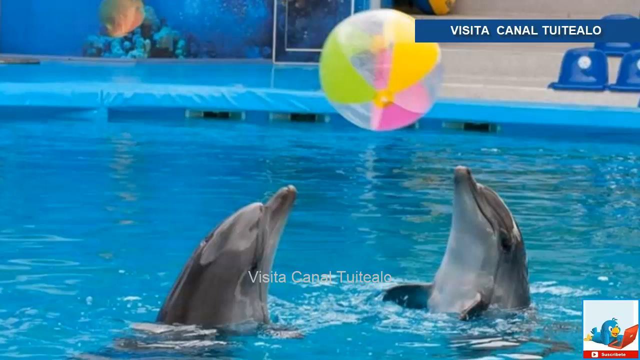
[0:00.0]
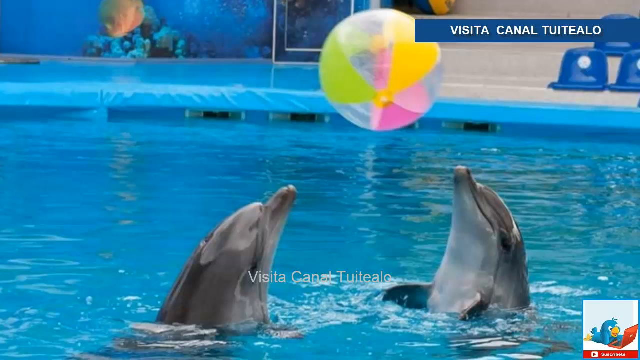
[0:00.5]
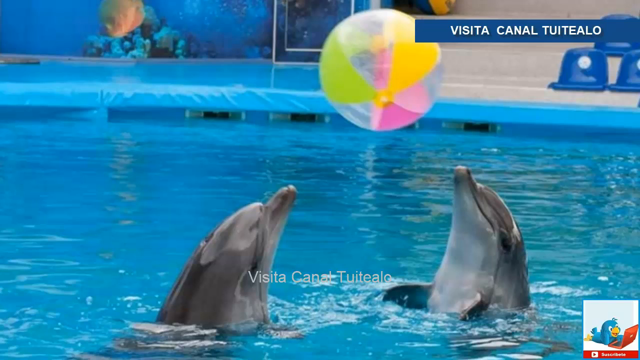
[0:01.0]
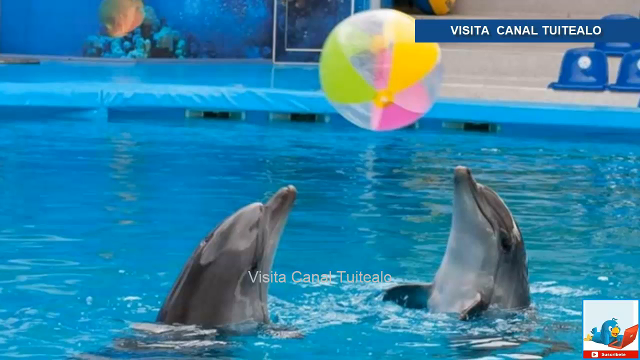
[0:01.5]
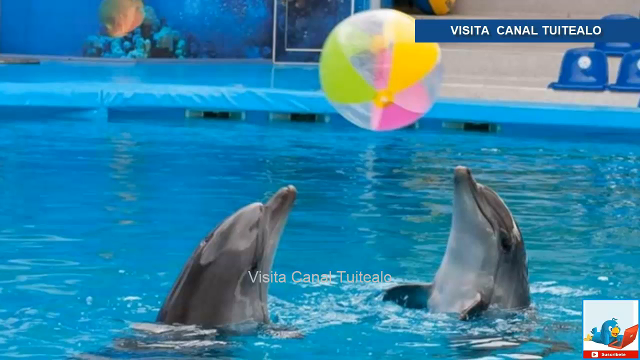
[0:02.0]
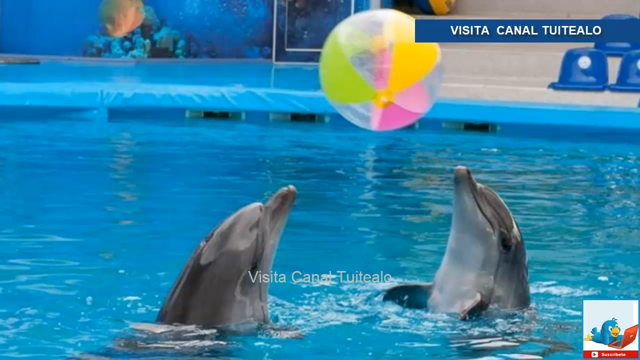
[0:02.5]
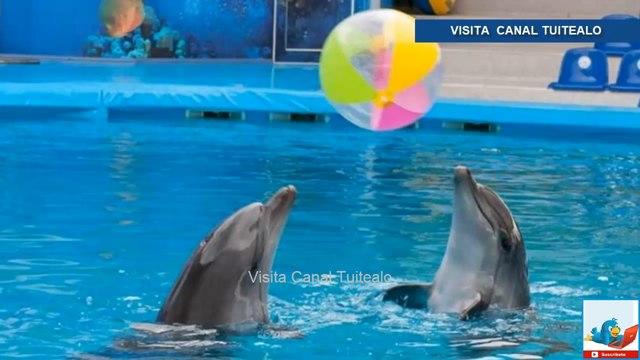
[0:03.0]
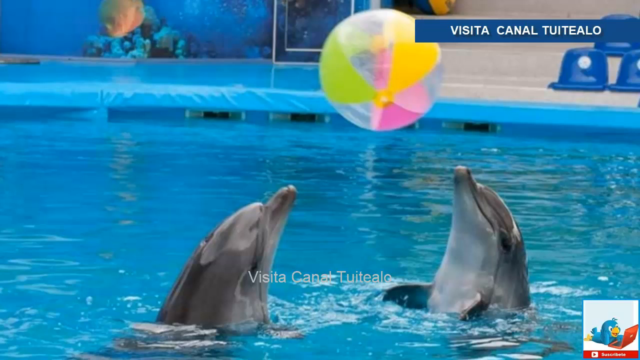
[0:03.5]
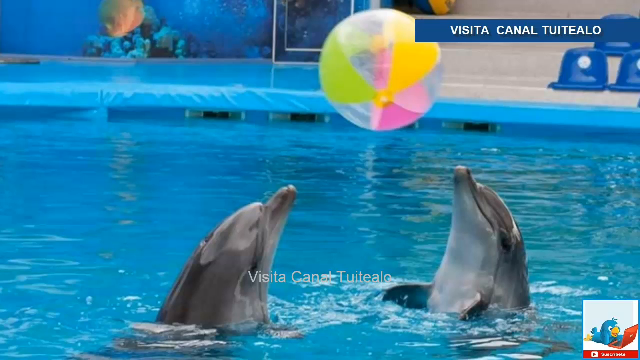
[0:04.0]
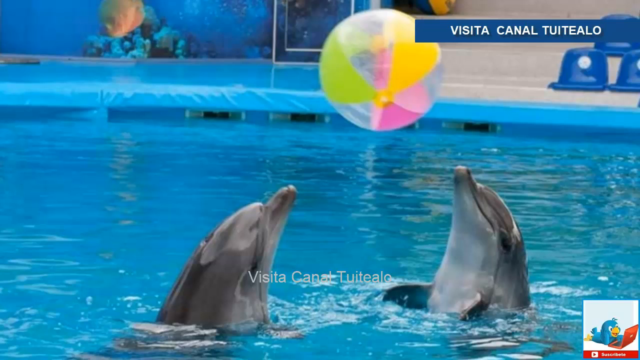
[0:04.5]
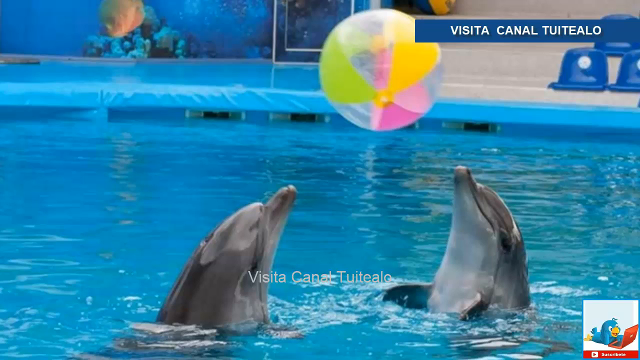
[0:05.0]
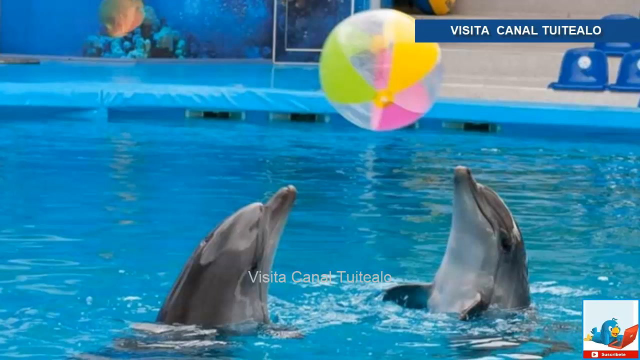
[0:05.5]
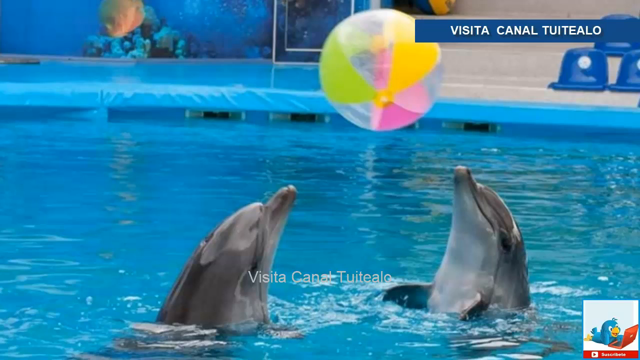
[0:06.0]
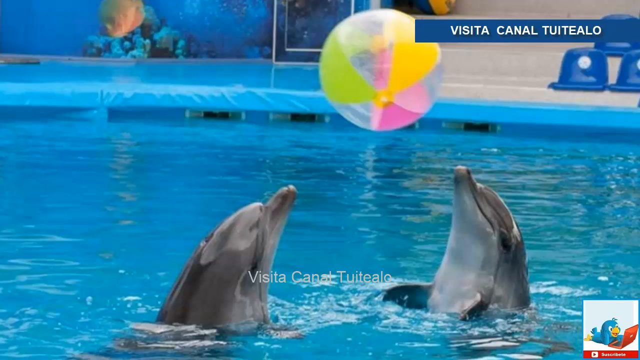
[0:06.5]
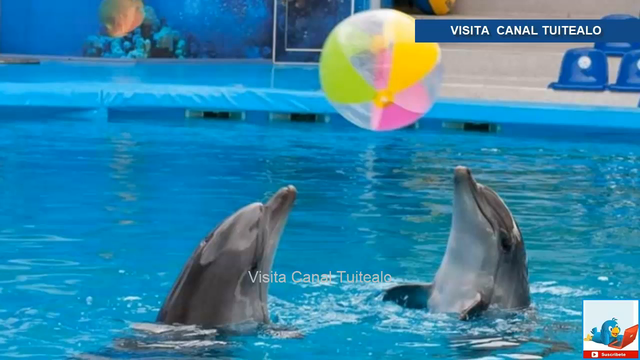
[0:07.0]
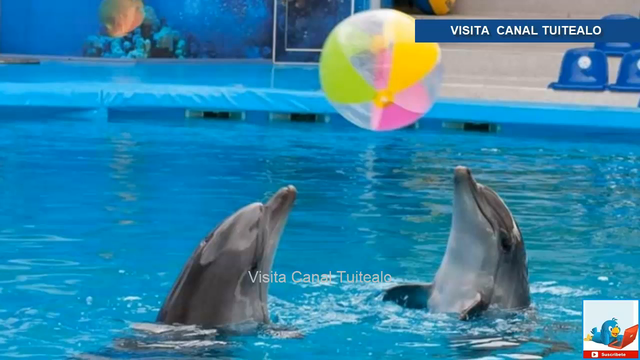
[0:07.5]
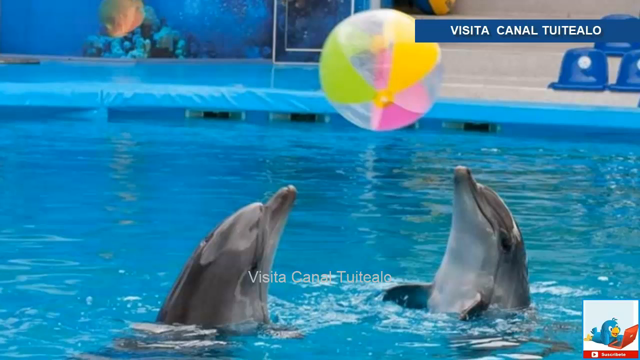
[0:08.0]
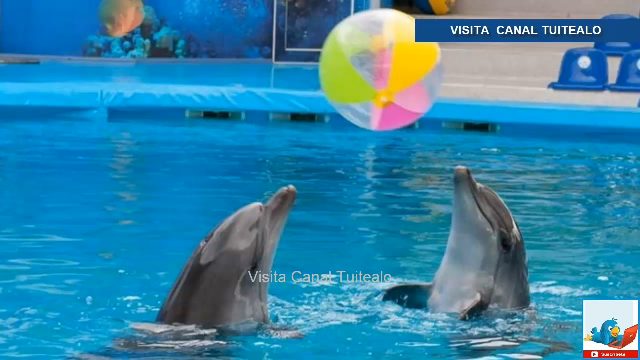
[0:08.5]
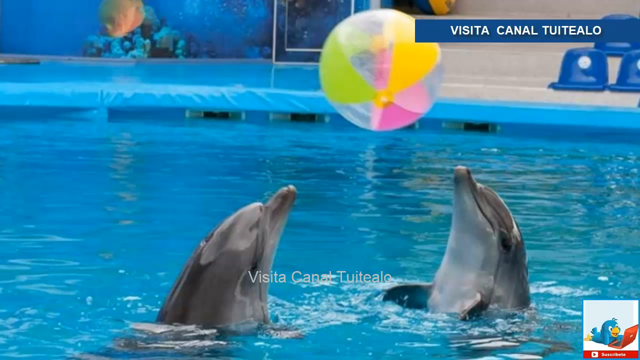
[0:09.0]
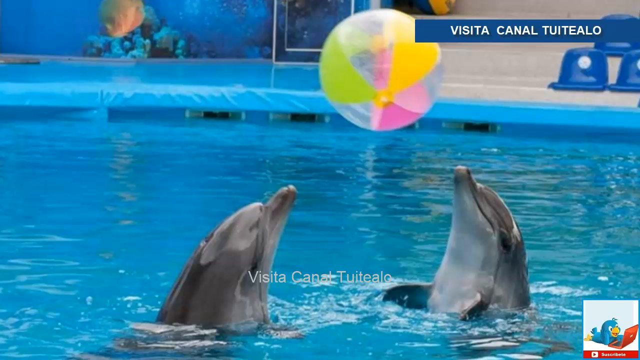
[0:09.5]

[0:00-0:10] The video opens on a still photograph of two dolphins in a swimming pool, facing each other, with an inflatable beach ball above them. At the top right of the screen, a blue banner with white writing reads "Visita Canal Tuatialo". In the background are plastic blue seats and what appears to be the side of a fish tank with coral inside it. At the bottom right, inside a blue square with a white background, is a small drawing of a blue bird looking at a red laptop.